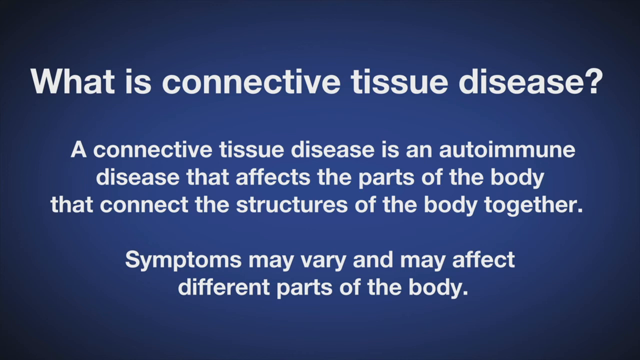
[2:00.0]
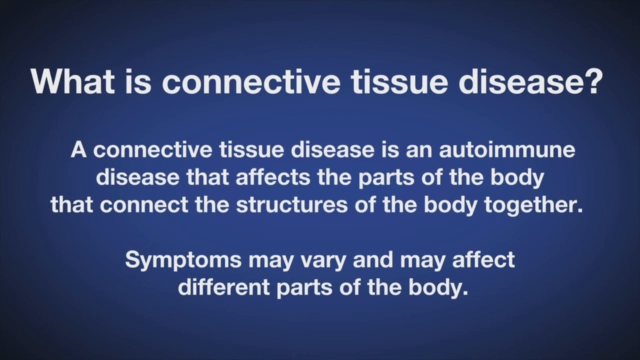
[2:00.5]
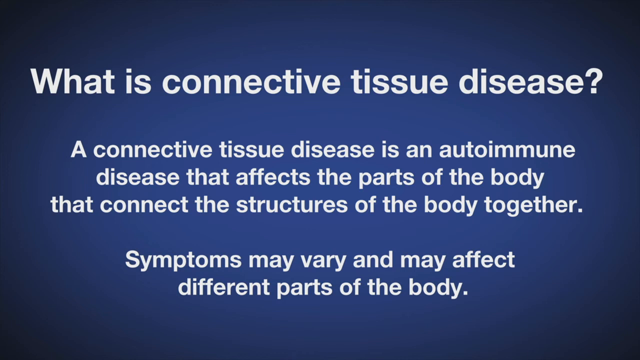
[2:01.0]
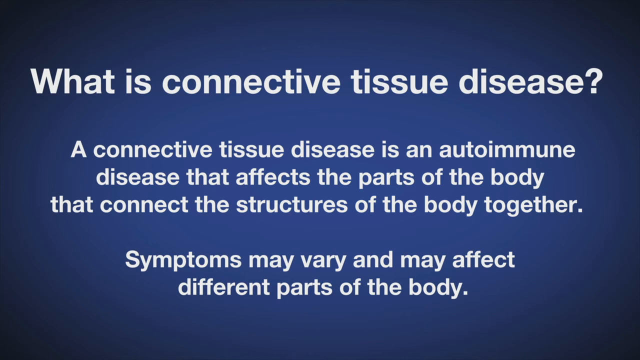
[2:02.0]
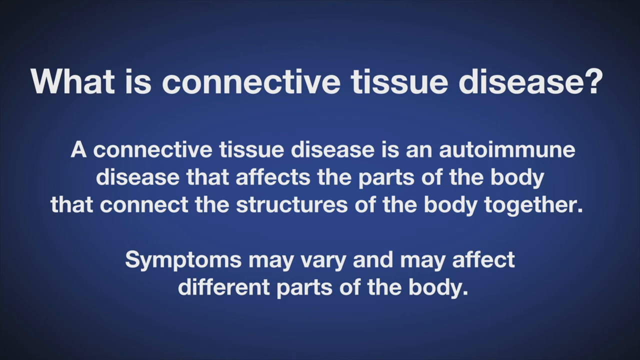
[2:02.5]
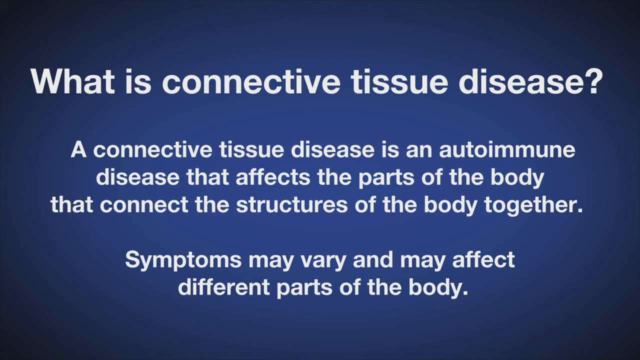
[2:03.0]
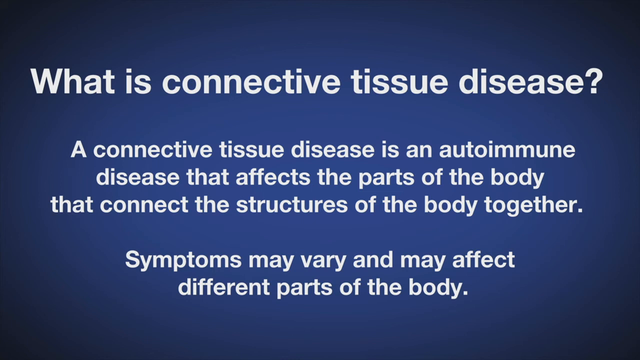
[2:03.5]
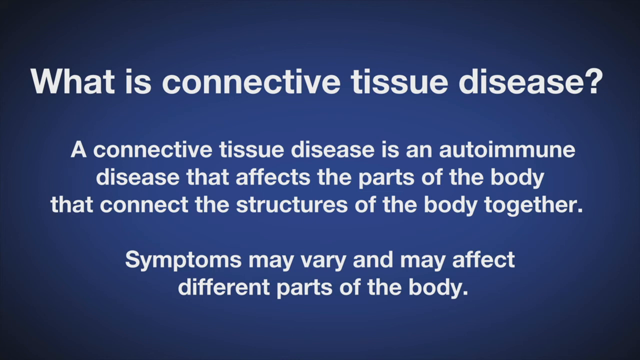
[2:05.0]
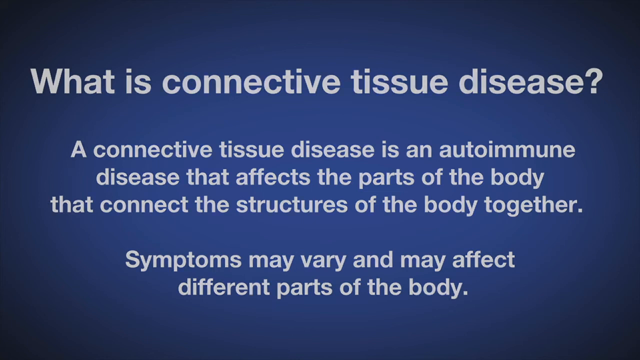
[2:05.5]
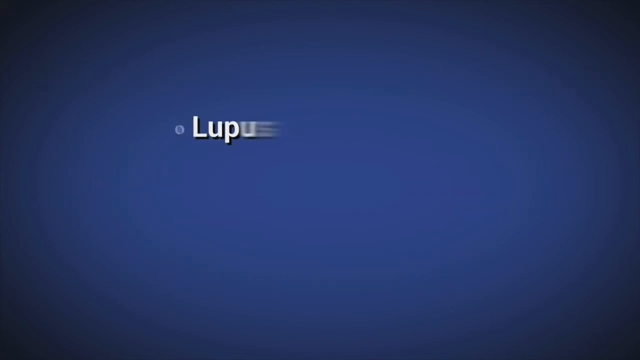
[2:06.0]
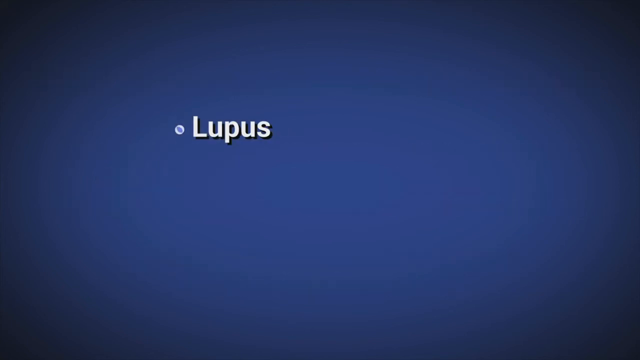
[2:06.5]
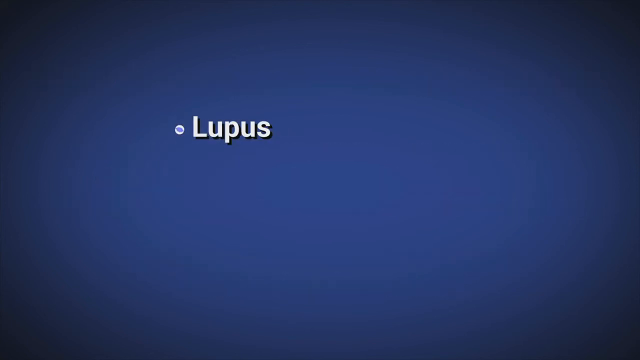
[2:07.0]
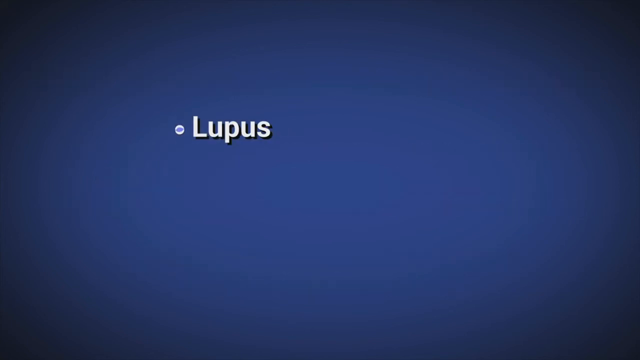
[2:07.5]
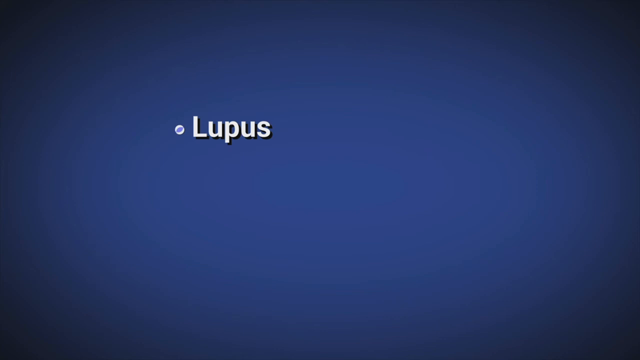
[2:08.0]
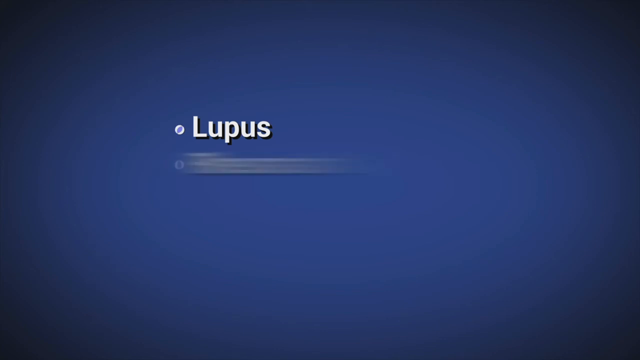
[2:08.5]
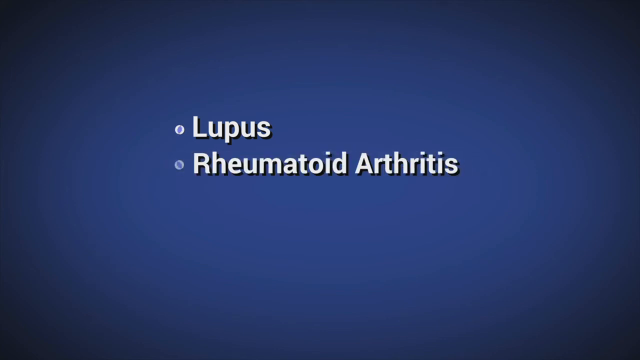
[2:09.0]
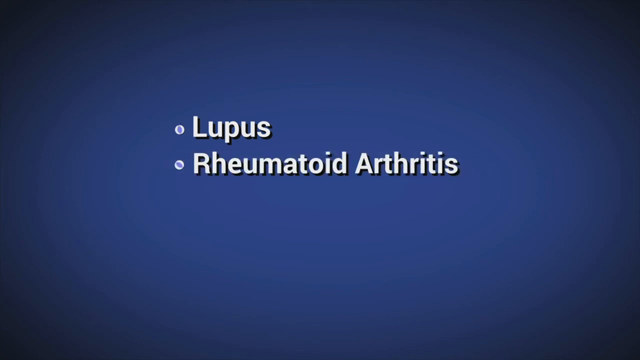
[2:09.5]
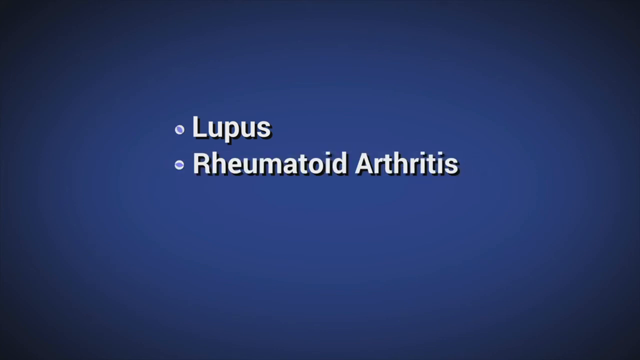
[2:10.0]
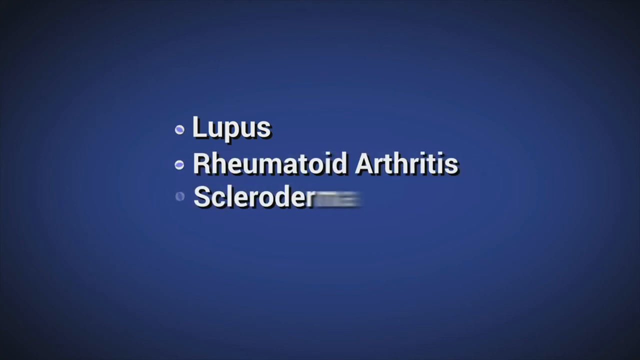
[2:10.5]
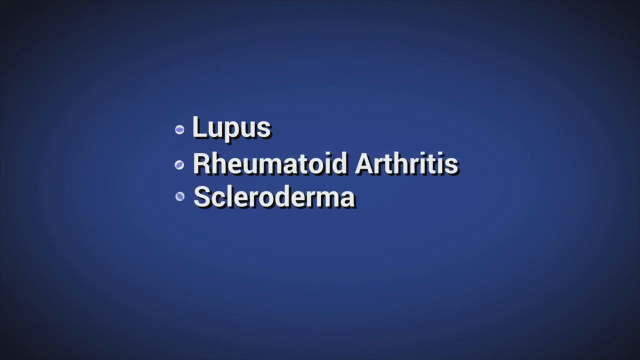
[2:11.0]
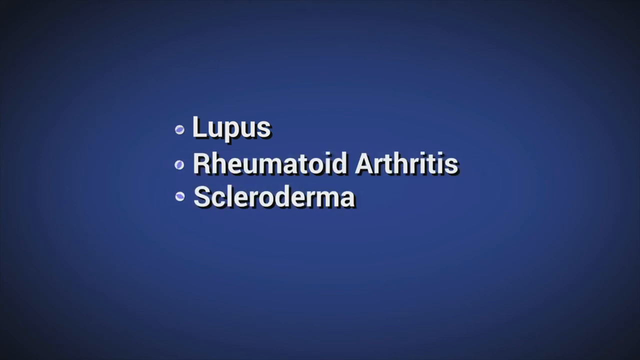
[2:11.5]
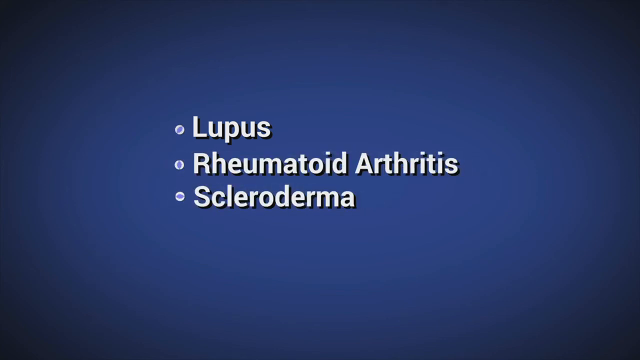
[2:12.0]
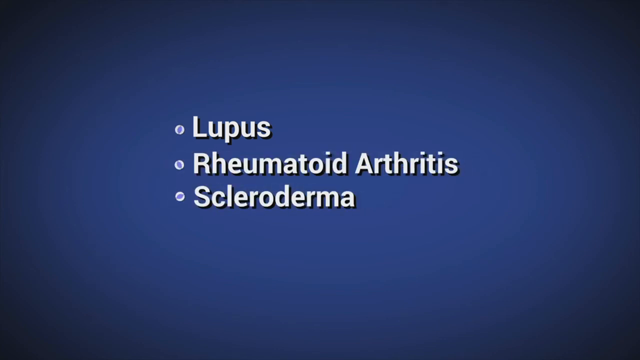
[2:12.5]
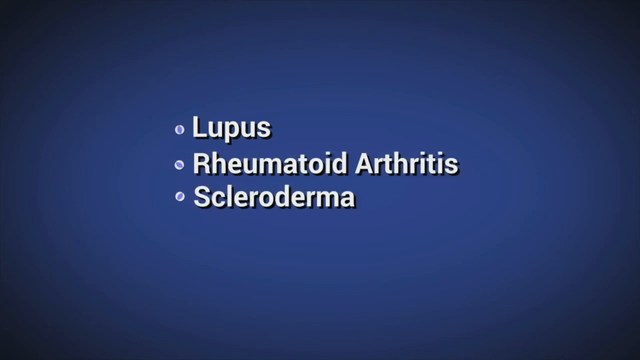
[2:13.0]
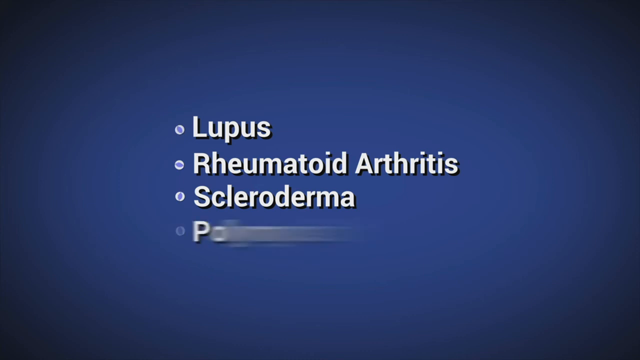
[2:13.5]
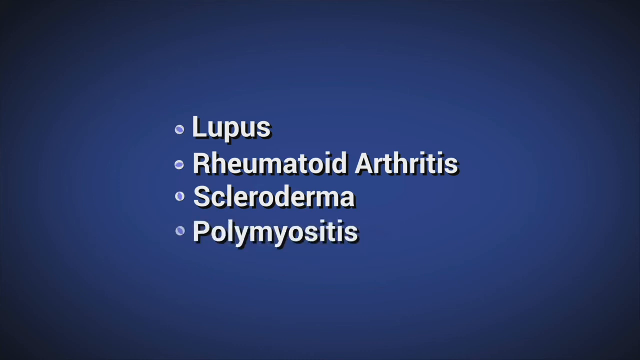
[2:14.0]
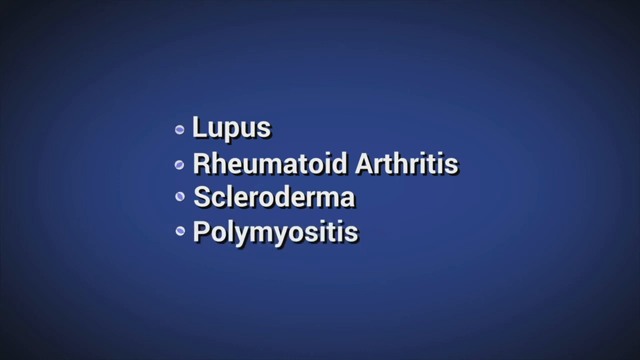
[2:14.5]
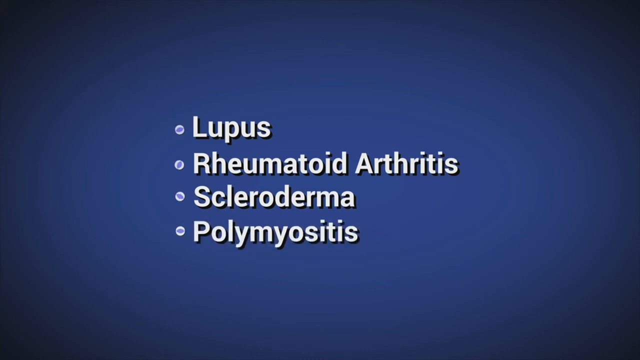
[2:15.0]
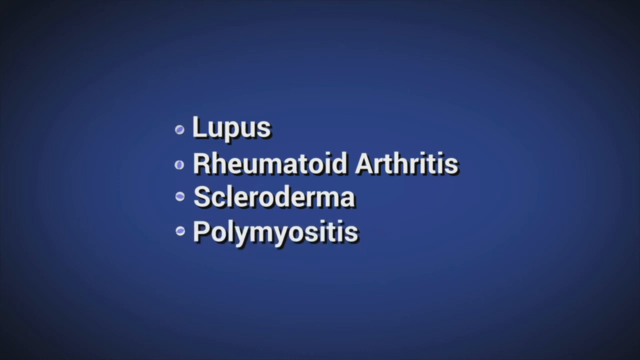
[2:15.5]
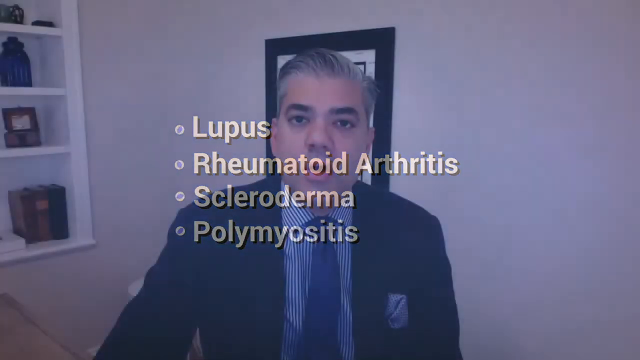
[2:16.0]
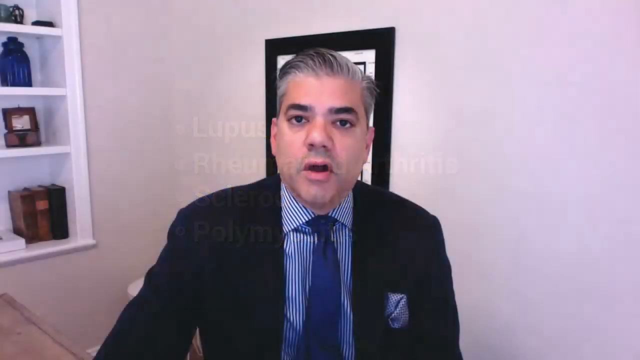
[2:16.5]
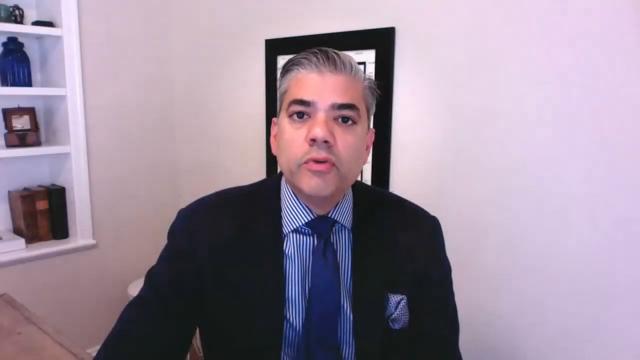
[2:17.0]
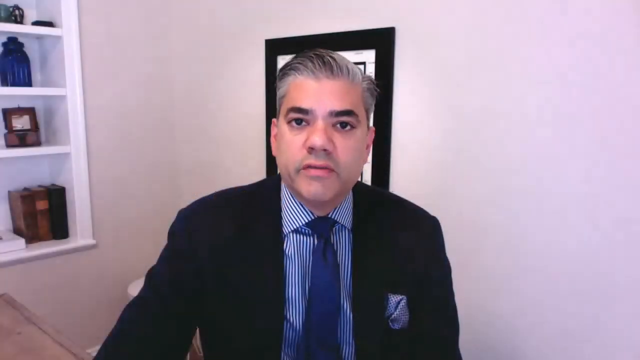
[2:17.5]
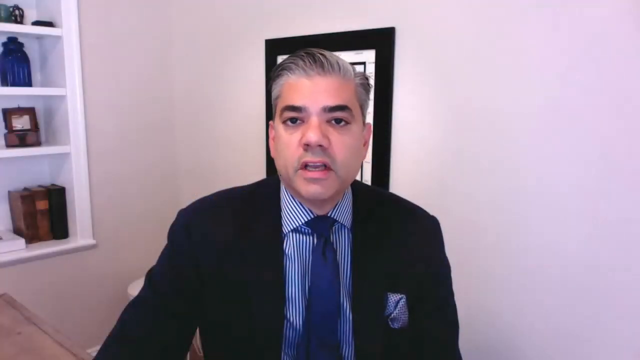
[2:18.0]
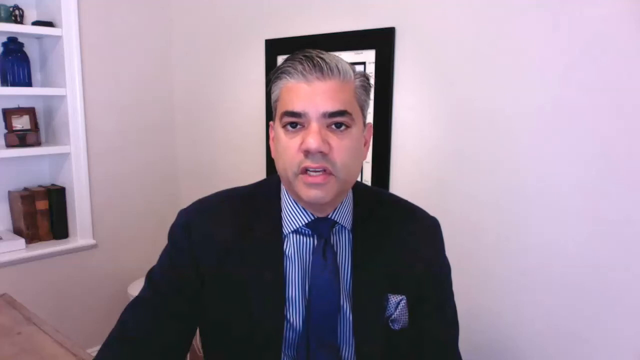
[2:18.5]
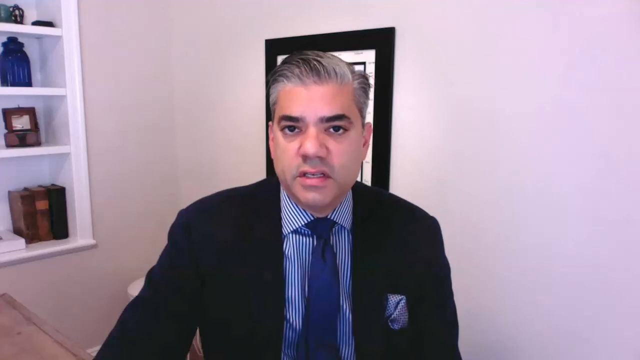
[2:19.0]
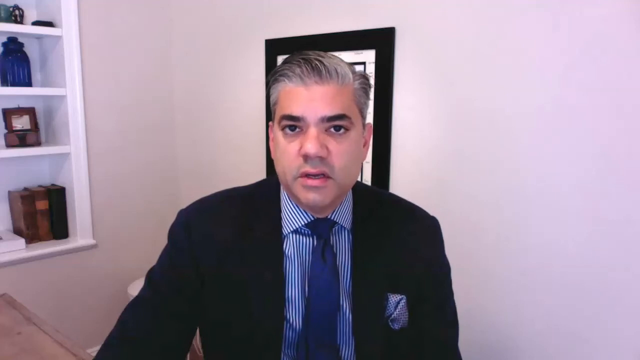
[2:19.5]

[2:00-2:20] The slide reading "what is connective tissue disease?" with its answer below stays on screen for the first few seconds. Then another slide appears, with dot points coming in slowly over time: "lupus", "rheumatoid arthritis", "scleroderma" and "polymyositis". The video quickly transitions back to the man, who continues speaking, probably explaining what was shown.